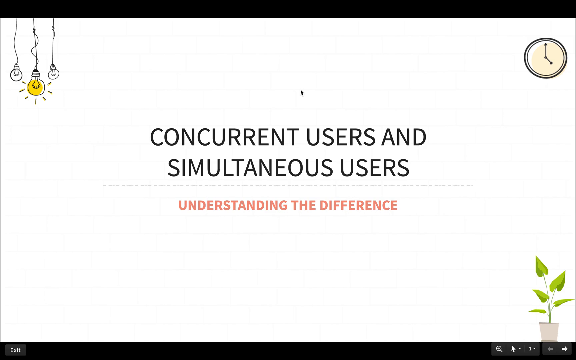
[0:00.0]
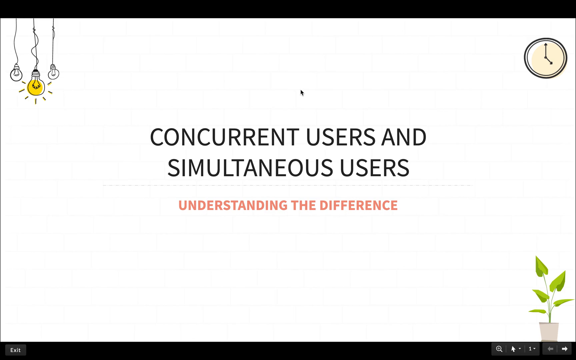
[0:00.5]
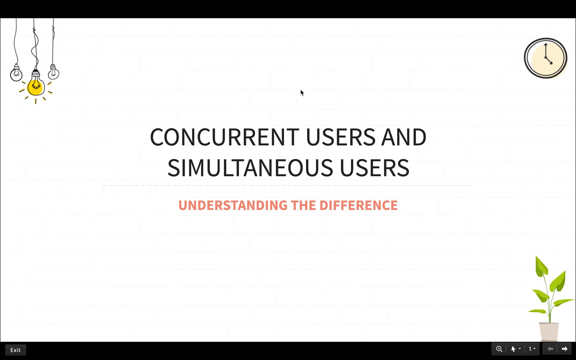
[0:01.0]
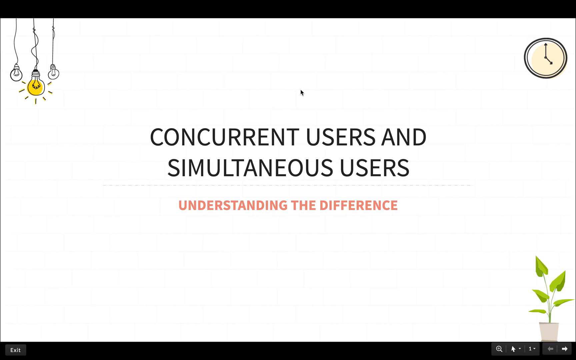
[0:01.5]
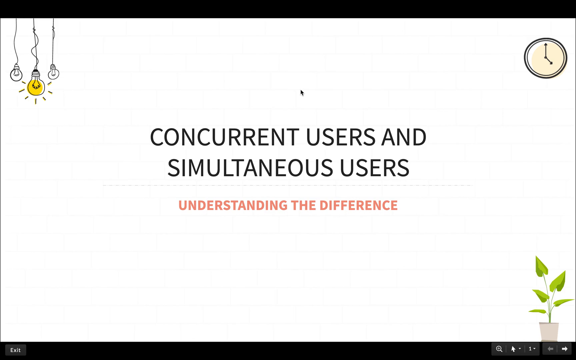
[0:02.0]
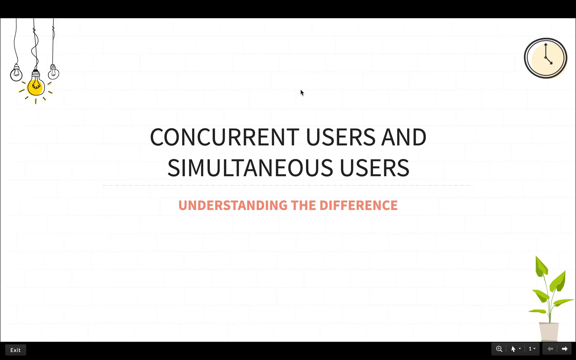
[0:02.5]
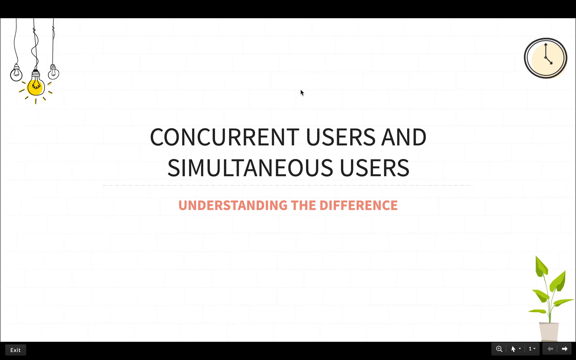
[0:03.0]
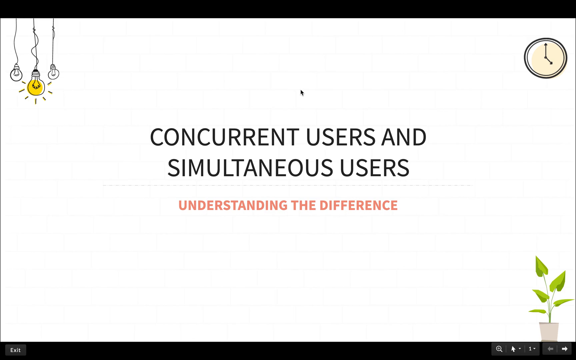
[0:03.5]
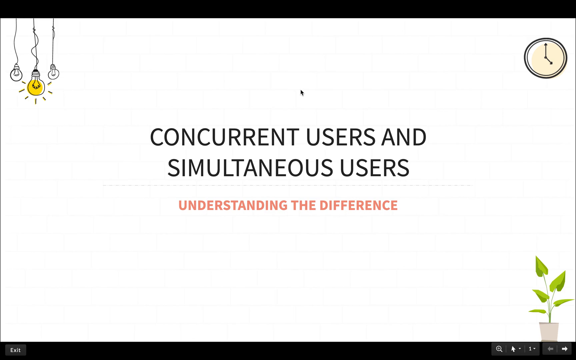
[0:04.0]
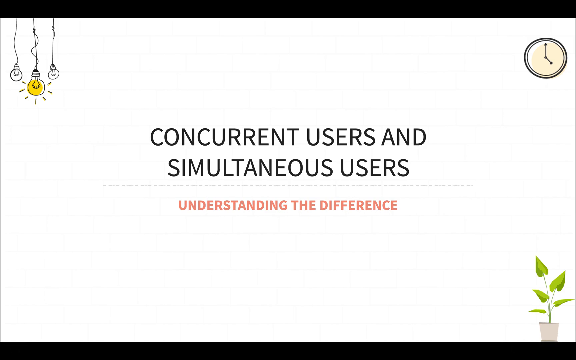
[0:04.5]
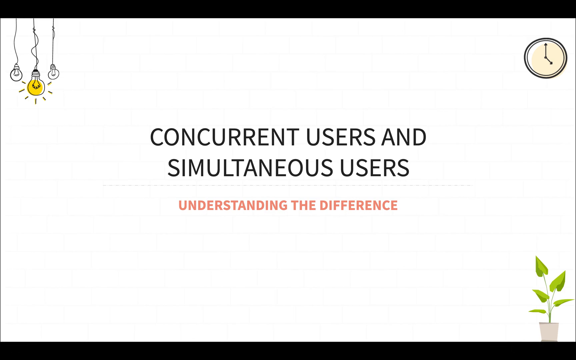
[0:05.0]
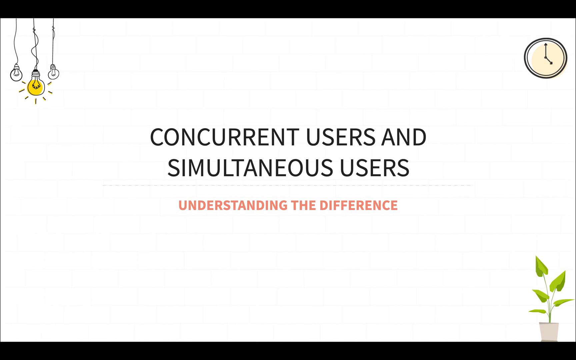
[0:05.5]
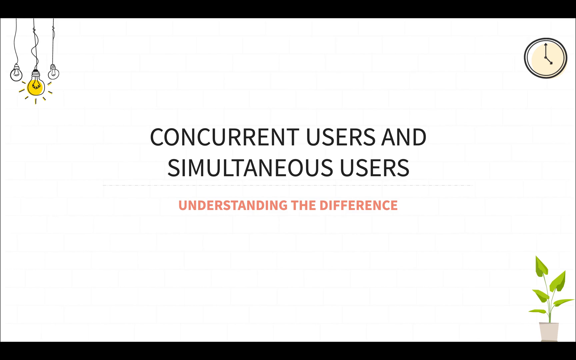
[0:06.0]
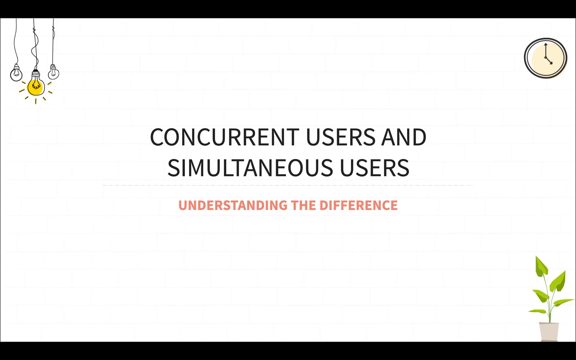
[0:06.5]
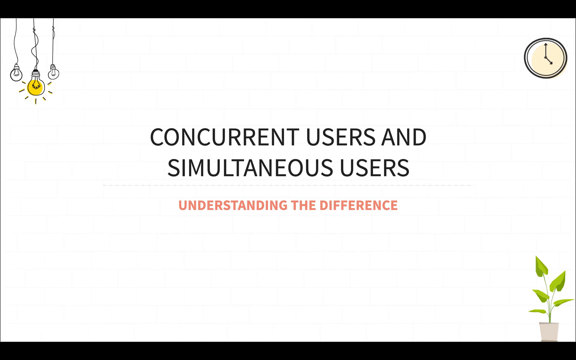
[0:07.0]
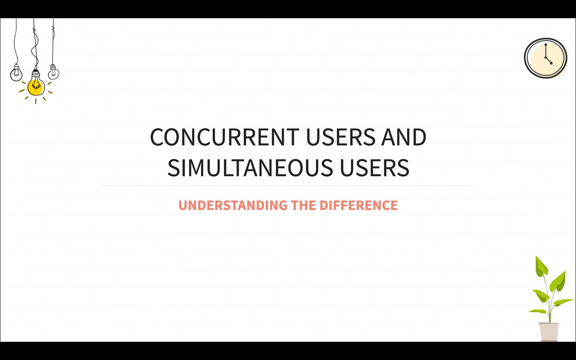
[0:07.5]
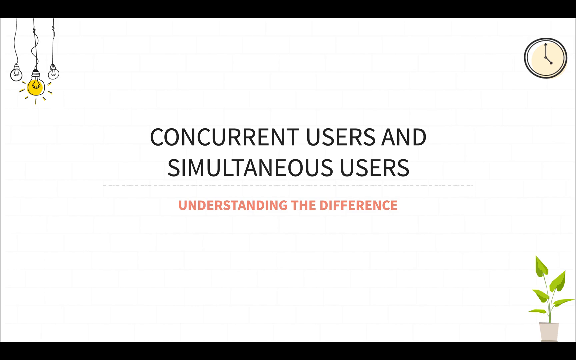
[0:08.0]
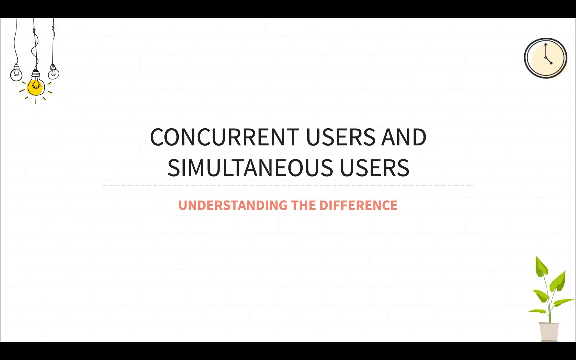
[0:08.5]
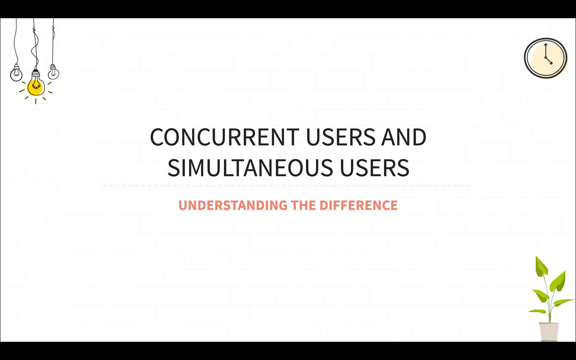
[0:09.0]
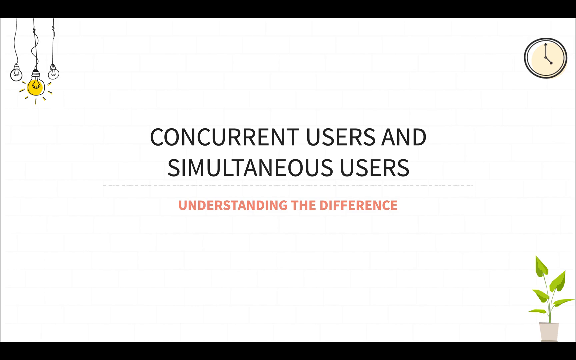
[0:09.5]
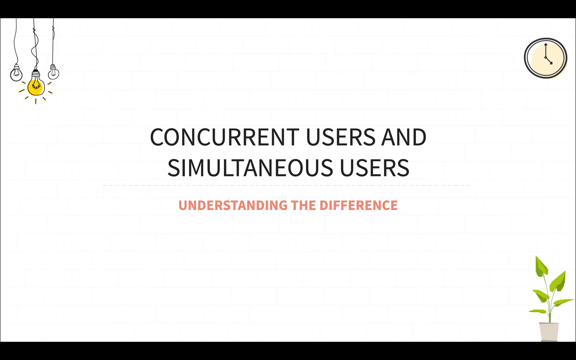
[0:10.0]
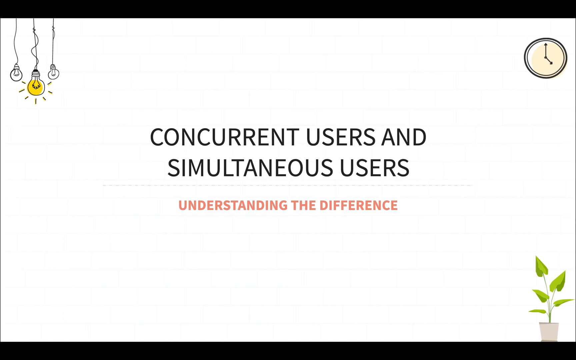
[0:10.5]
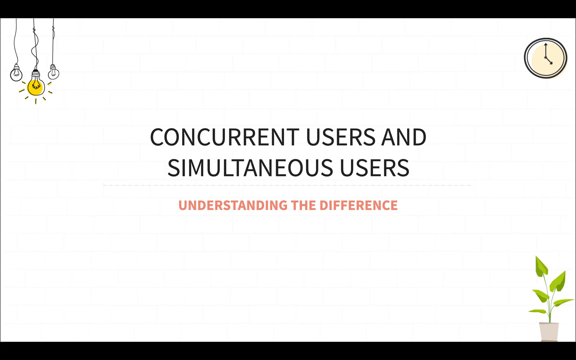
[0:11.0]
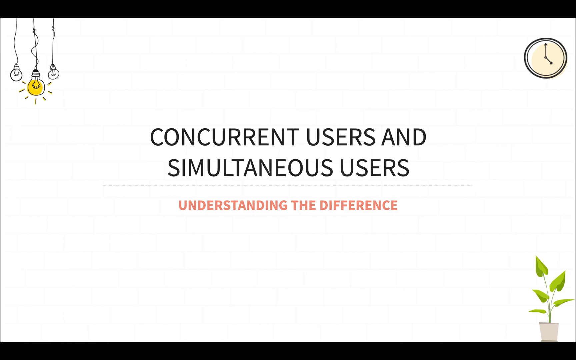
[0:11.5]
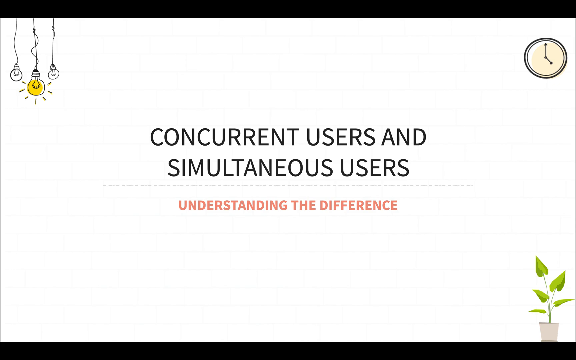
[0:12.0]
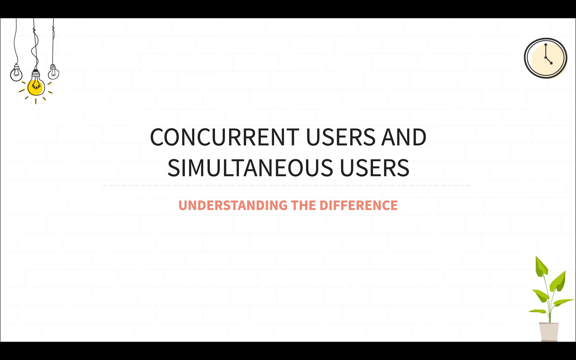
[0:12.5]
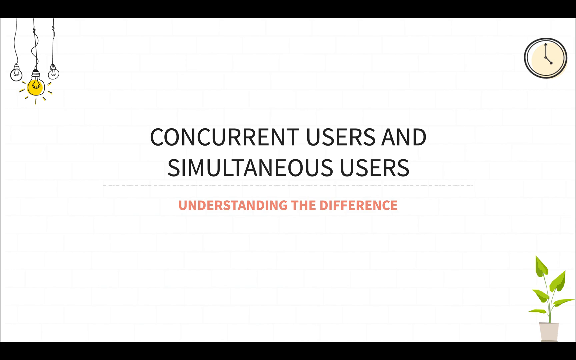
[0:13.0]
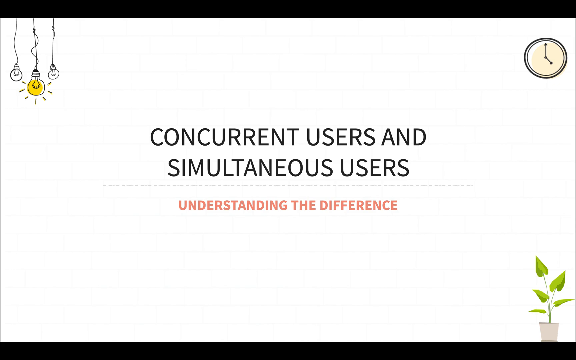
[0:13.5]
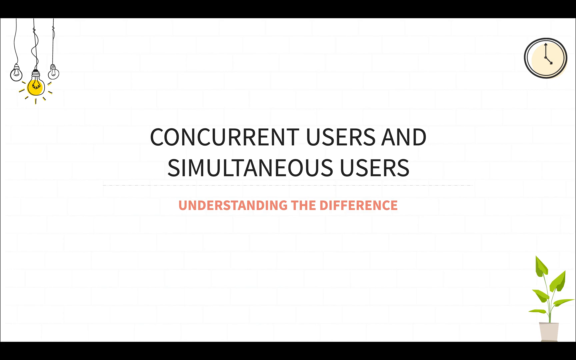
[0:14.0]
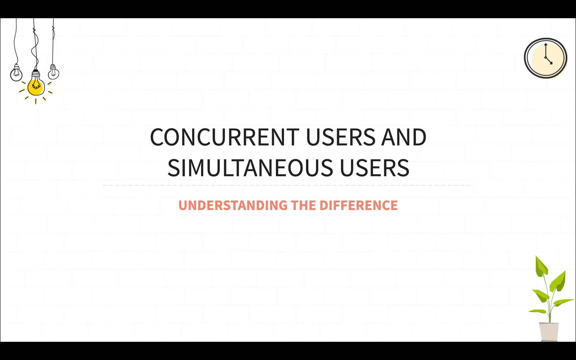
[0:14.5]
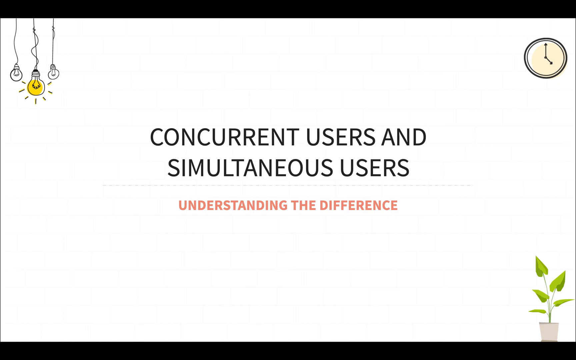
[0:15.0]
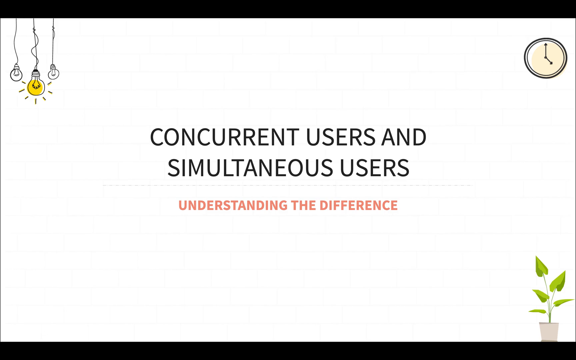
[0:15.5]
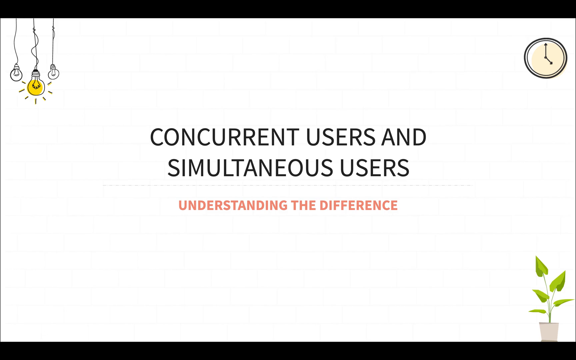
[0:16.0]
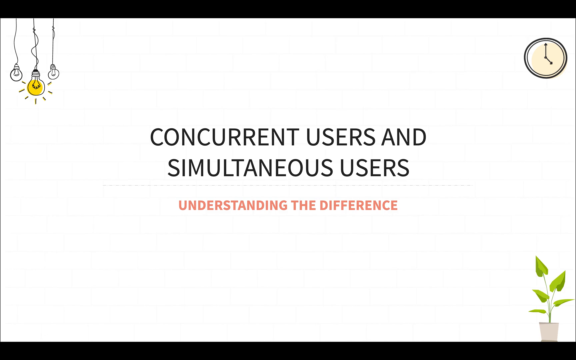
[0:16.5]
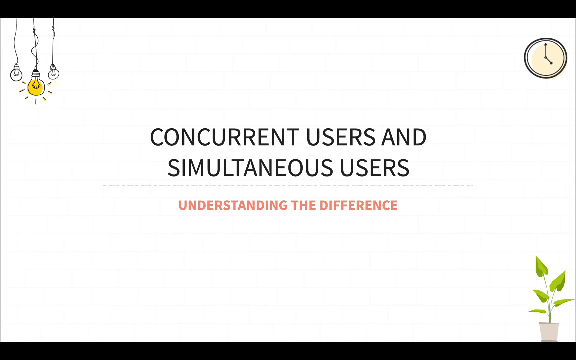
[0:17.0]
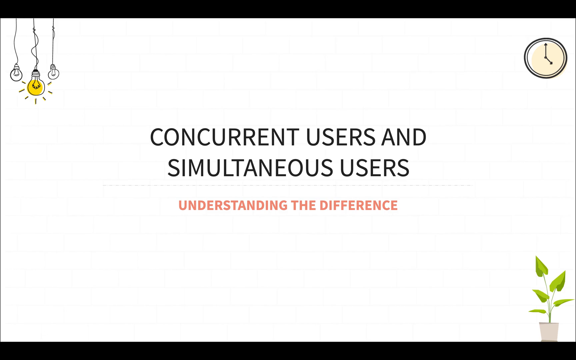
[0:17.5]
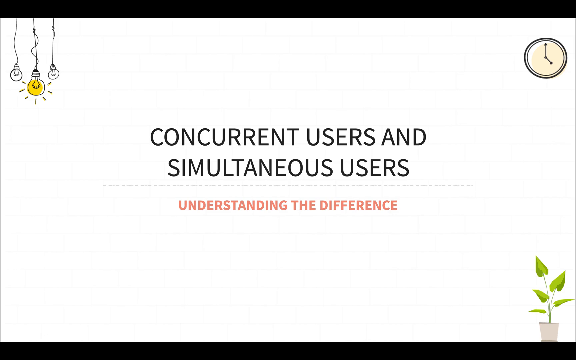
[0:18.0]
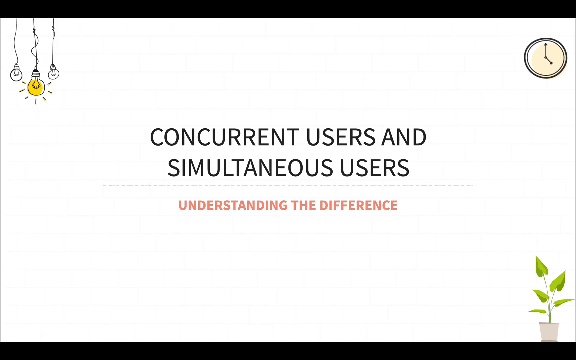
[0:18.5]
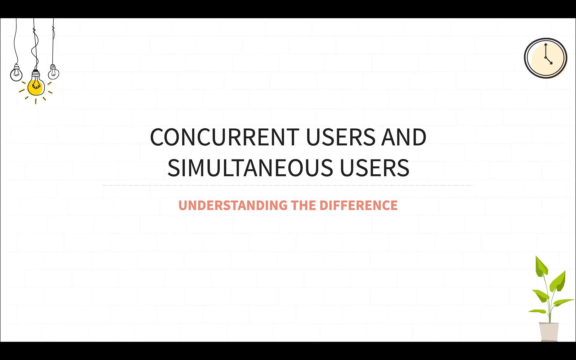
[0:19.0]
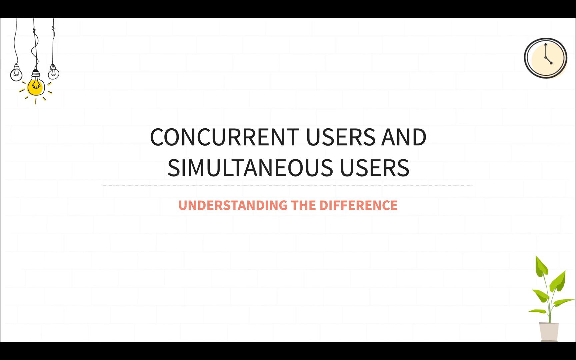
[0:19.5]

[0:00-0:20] The video is titled Concurrent Users and Simultaneous Users, Understanding the Difference. It opens on a white screen with thin black borders along the top and bottom. In the upper left corner, a group of light bulbs dangles down; the middle bulb is bigger than the two on the sides. The side bulbs are white, while the middle one is on, yellow, with dashes coming out of it to show that it is lit. A clock showing 5 o'clock is in the right-hand corner, and a plant with kind of heart-shaped leaves grows up out of the bottom right corner in a flower pot. Nothing else happens; the same white screen stays on display.